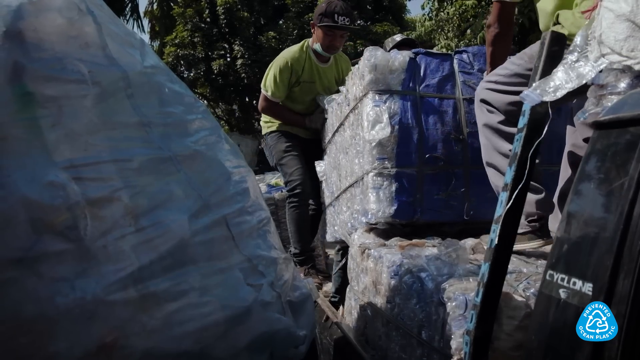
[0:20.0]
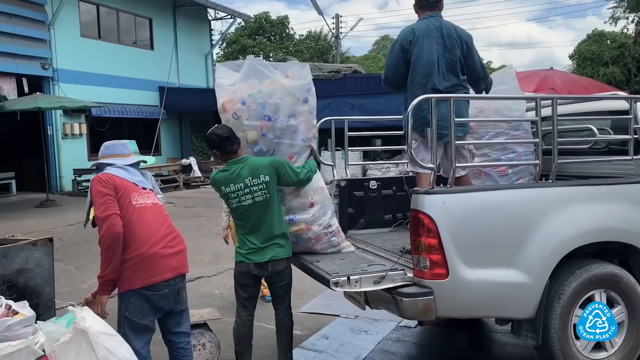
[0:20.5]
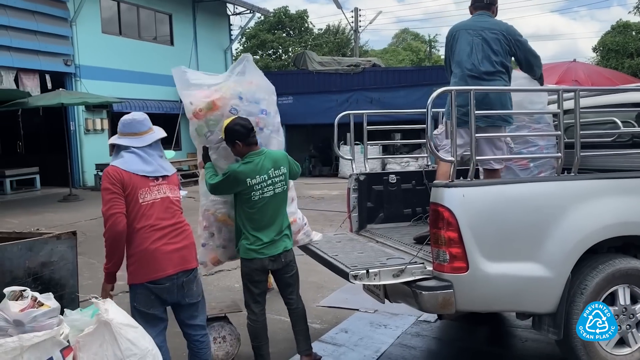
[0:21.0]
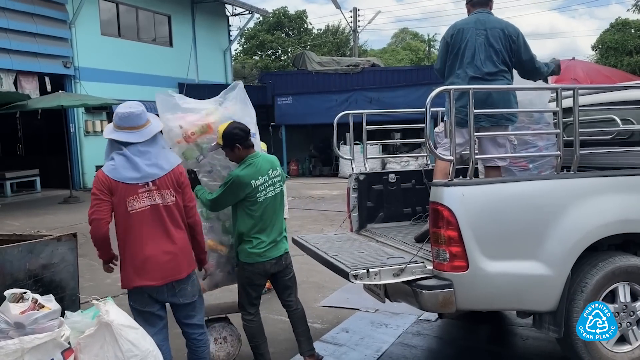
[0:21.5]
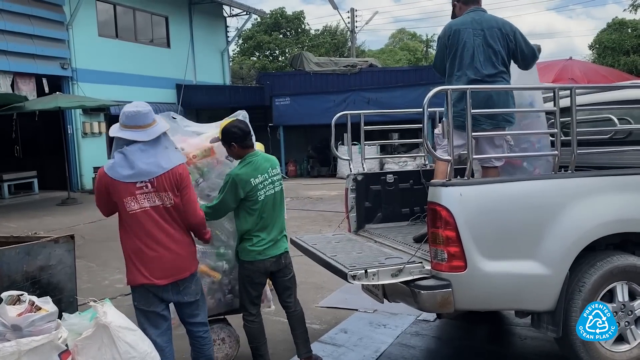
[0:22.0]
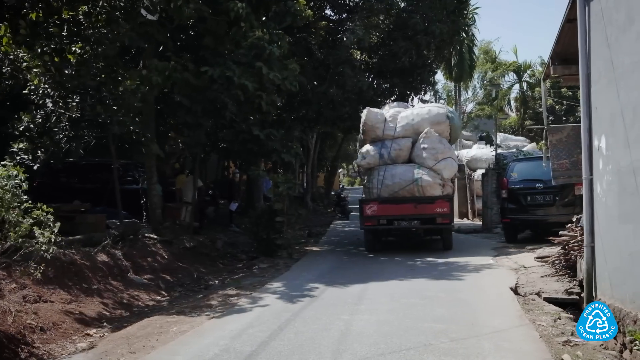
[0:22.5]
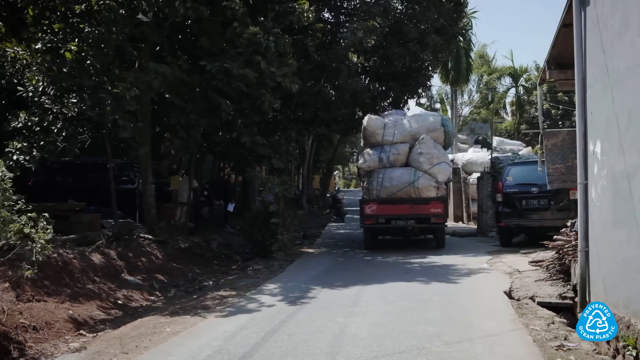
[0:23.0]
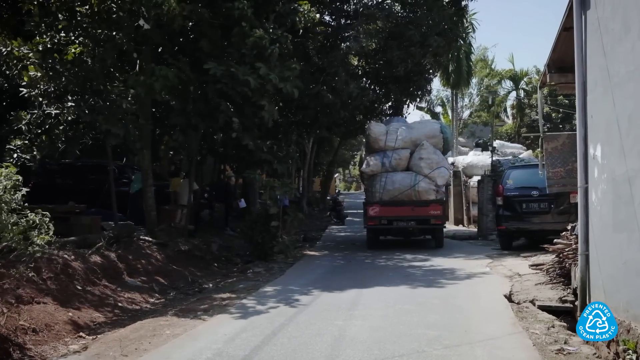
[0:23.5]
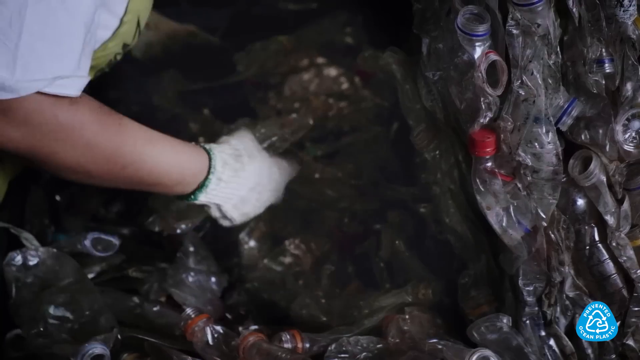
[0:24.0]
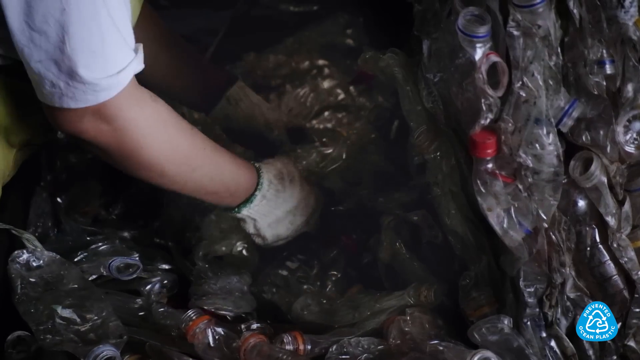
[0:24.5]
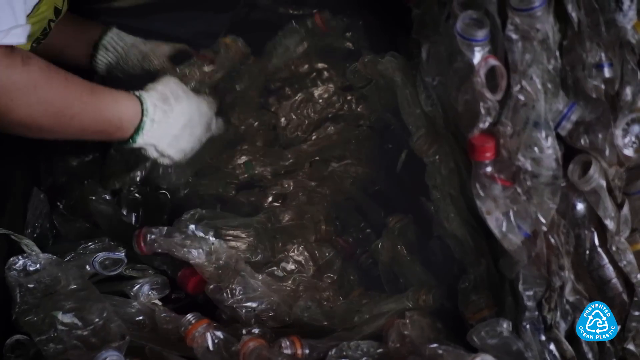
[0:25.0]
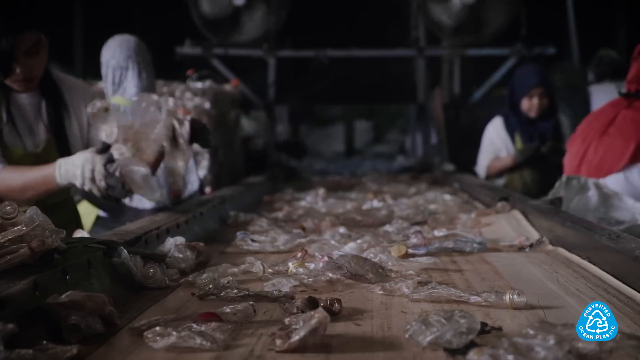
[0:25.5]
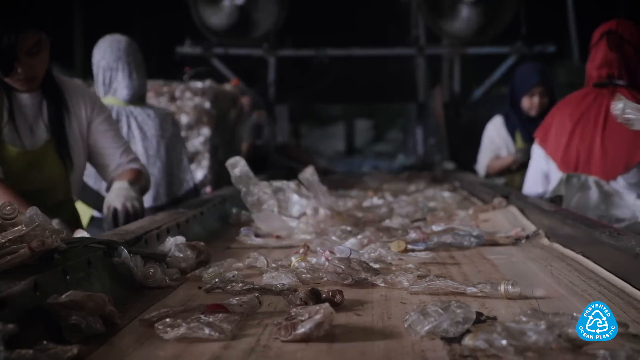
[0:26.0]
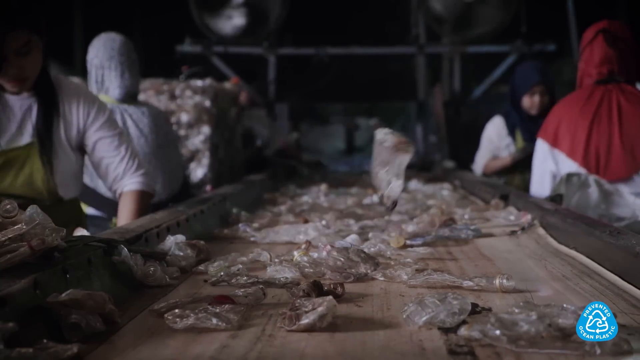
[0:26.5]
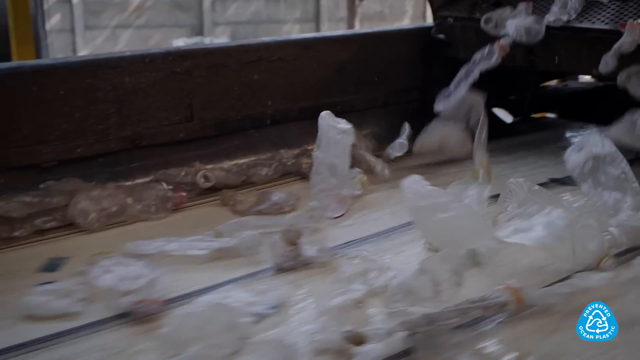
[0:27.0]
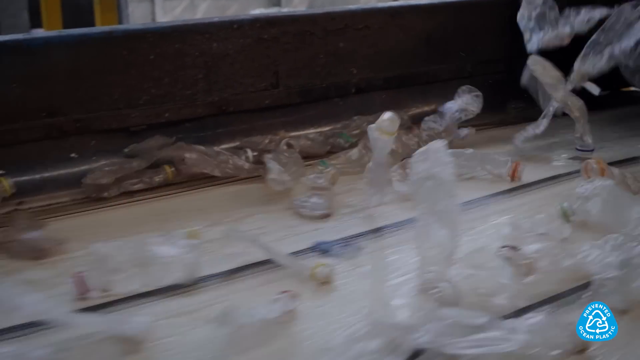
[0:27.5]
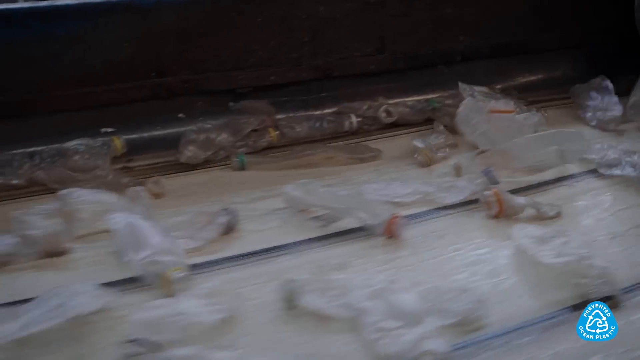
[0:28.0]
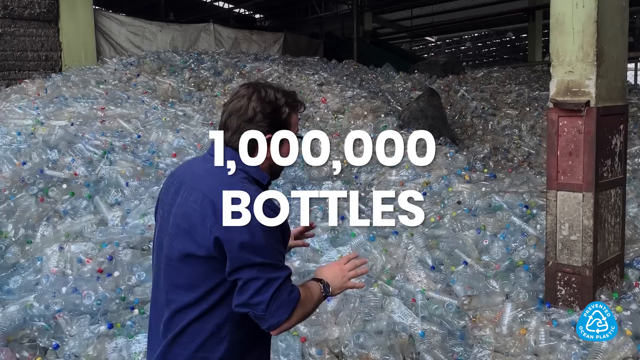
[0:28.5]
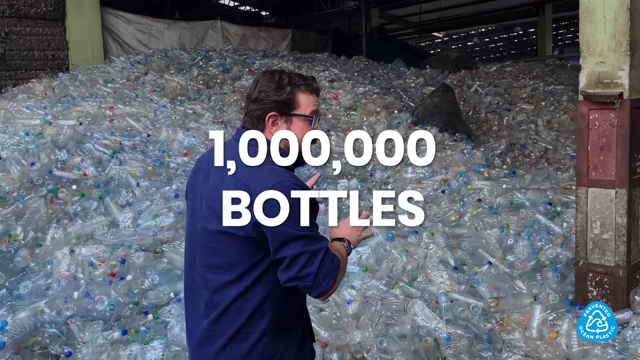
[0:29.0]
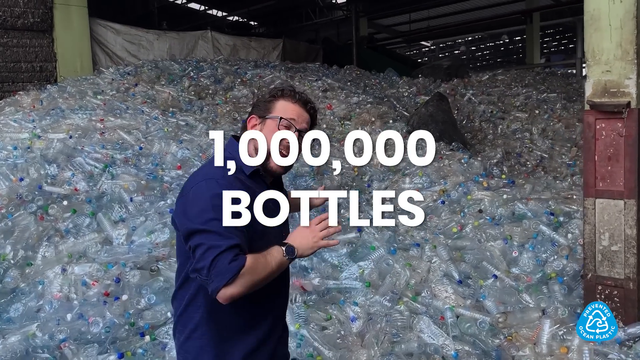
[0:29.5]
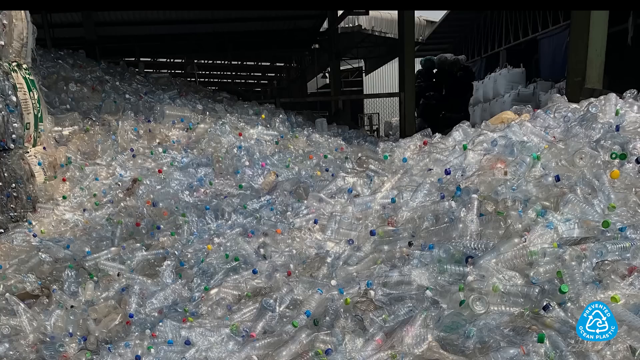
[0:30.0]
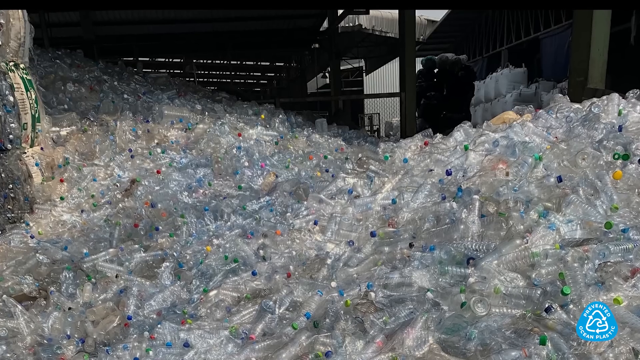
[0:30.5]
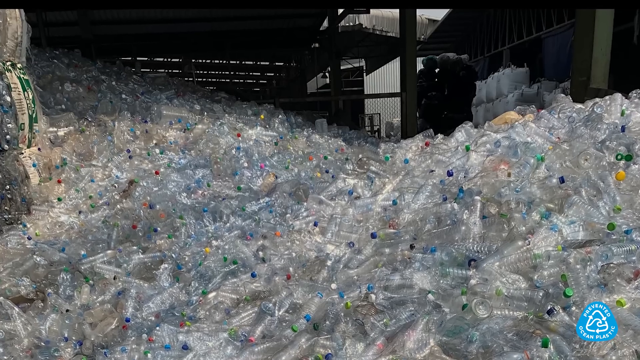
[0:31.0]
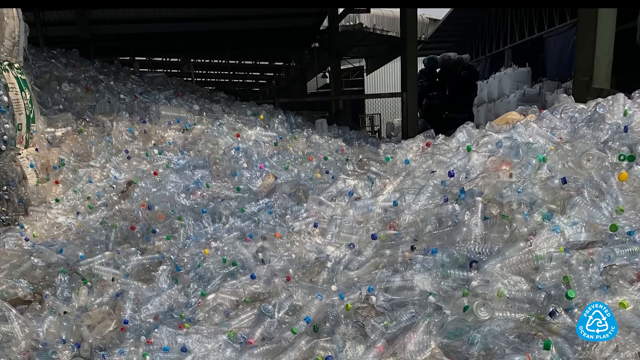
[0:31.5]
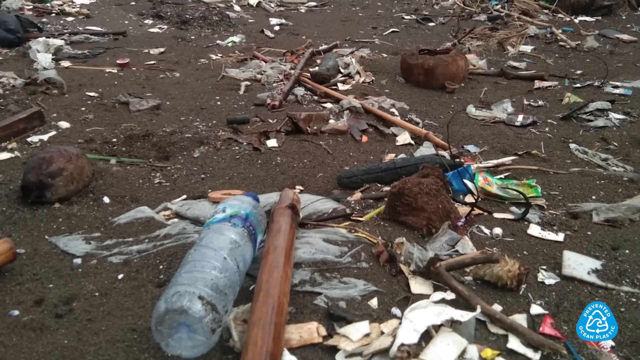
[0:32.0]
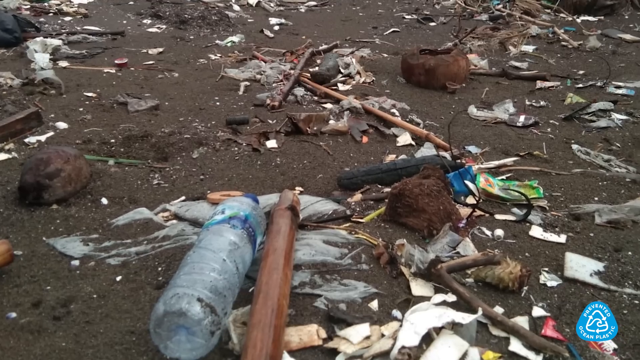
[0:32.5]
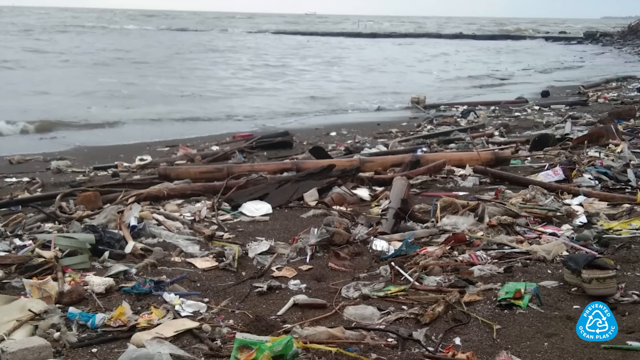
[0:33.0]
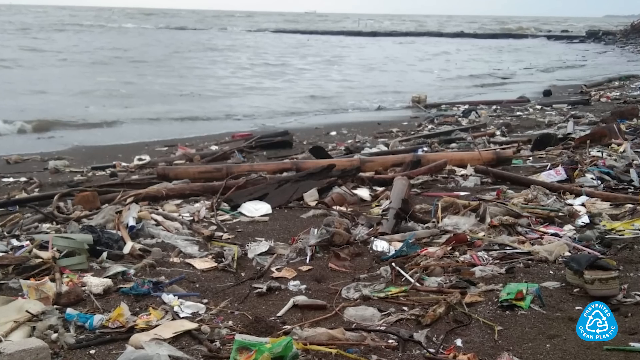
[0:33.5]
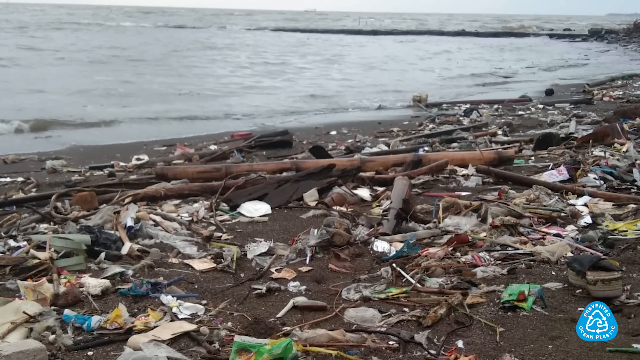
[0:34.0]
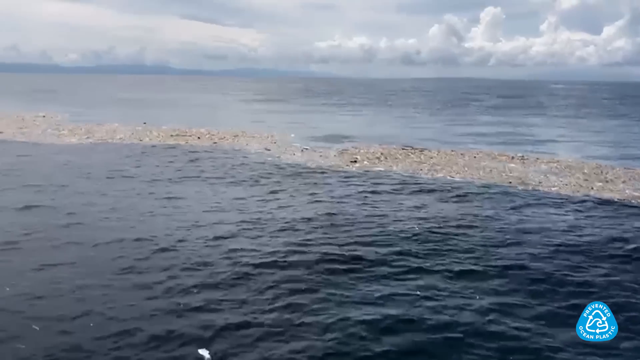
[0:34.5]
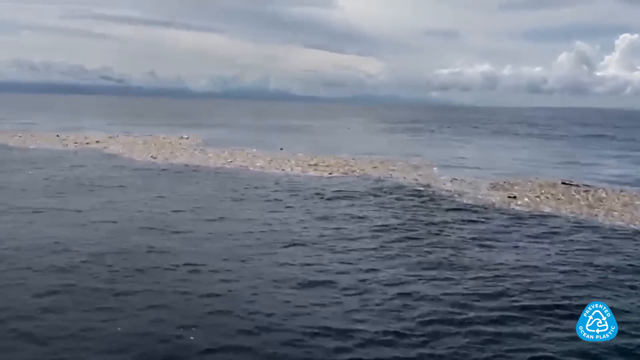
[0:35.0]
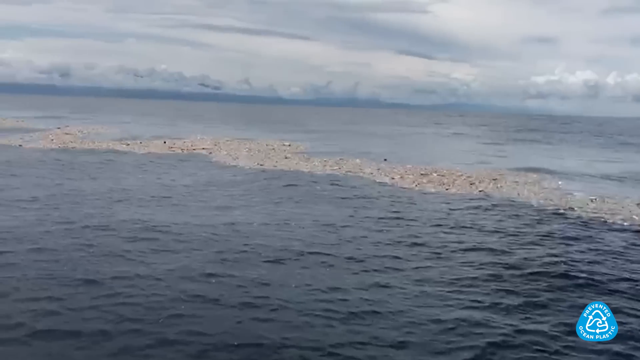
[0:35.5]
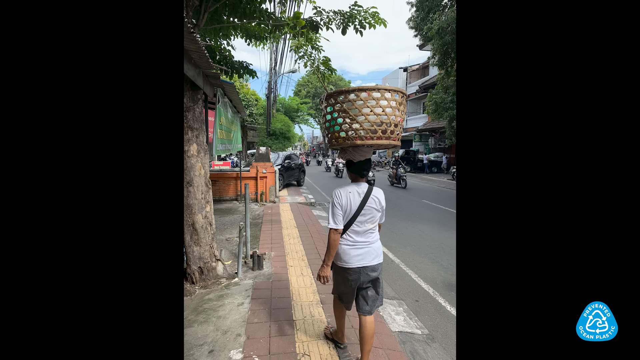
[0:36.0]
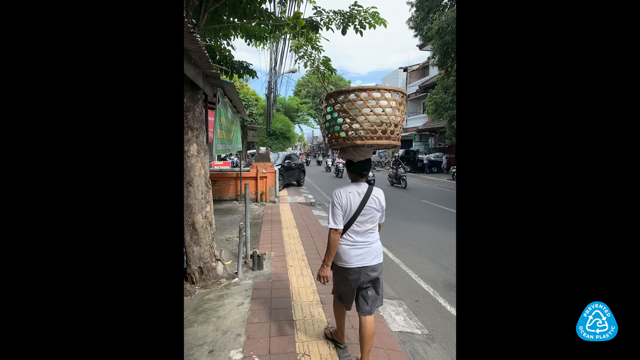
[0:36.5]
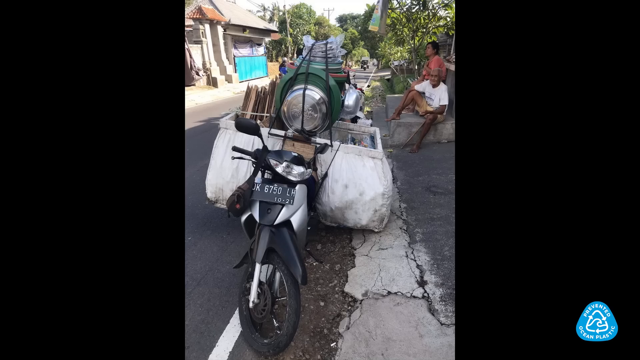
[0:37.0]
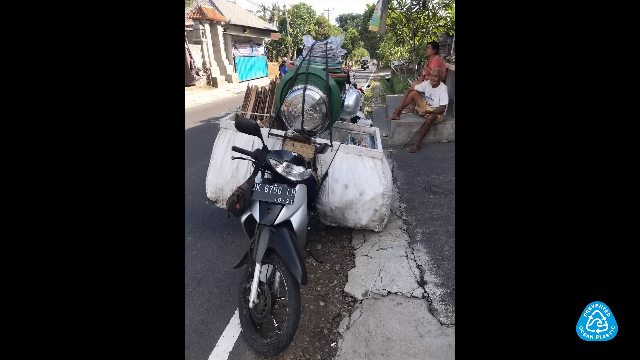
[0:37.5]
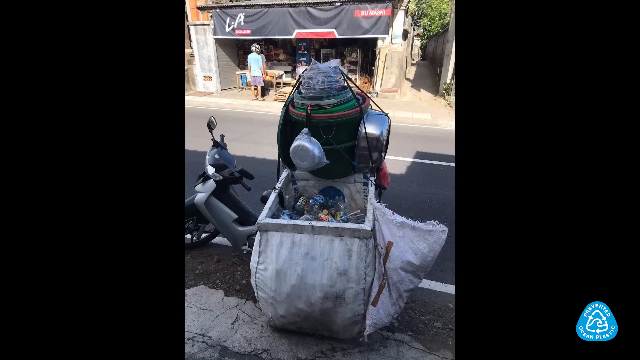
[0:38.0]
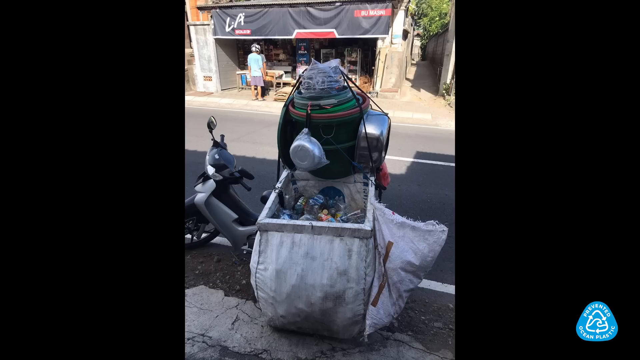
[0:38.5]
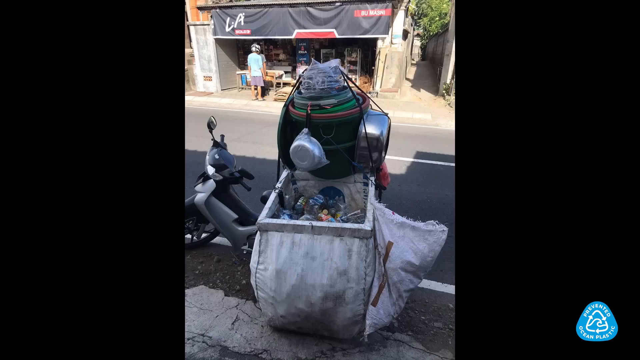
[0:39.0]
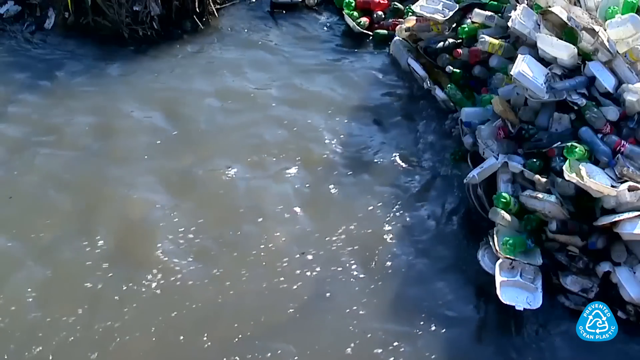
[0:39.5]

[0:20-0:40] People help unload a truck full of bags of recycled plastic. One man is inside the back of the truck, a silver truck with its gate open and safety rails. A man in a long green shirt and pants carries one of the garbage bags over, and another man wearing a hat also helps. The scene changes to a truck driving away, completely filled with giant bags full of plastic bottles. Next, women go through bags of plastic containers and put them on a conveyor belt. A man says they have a million bottles in this one area, where the bottles are completely stacked up. Debris and garbage that came in from the ocean are stuck on the shore.